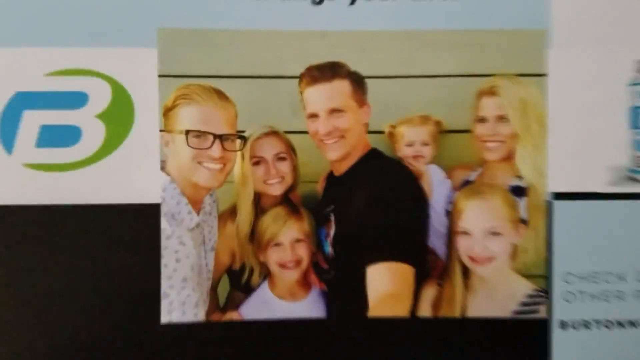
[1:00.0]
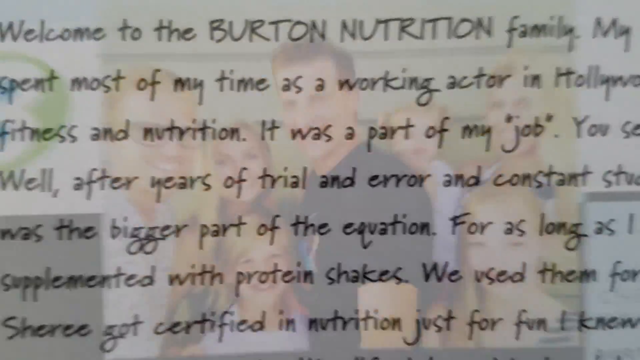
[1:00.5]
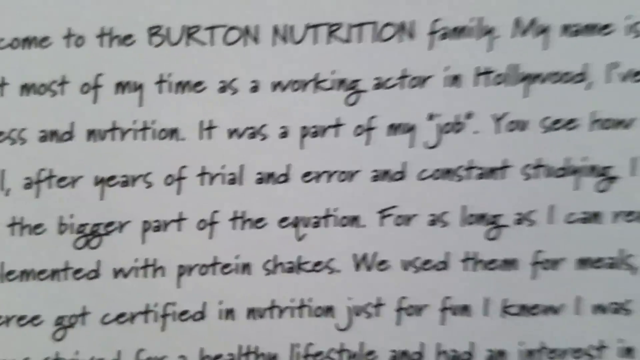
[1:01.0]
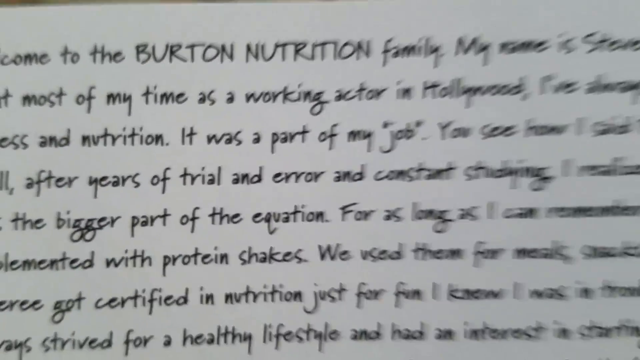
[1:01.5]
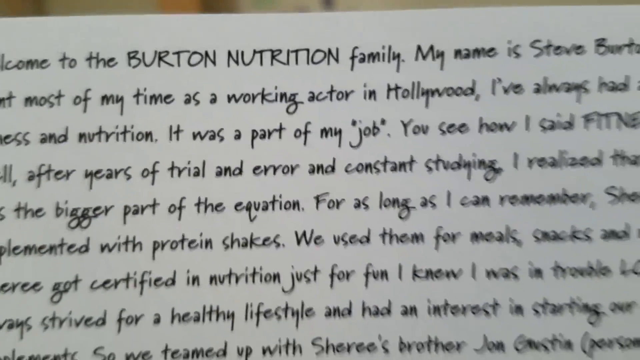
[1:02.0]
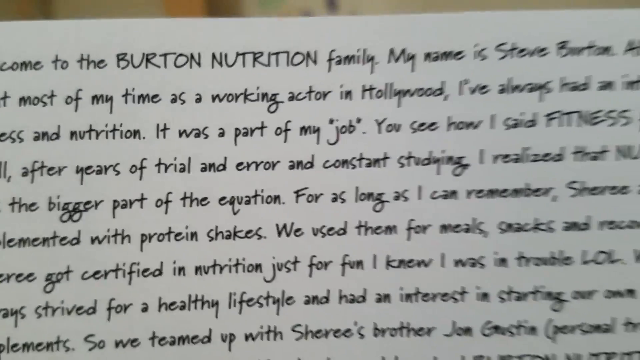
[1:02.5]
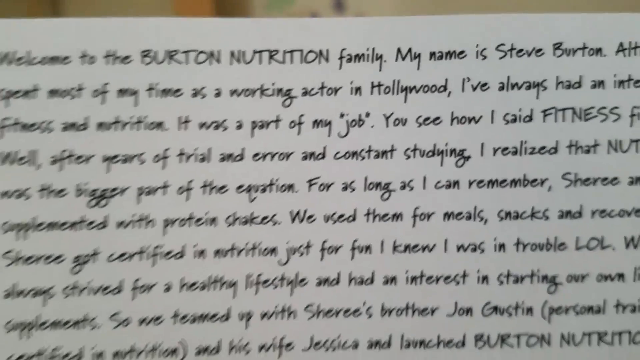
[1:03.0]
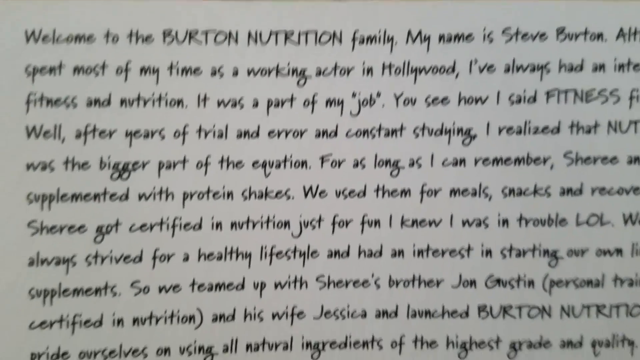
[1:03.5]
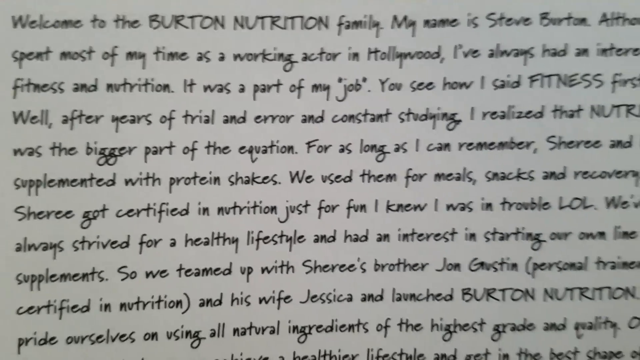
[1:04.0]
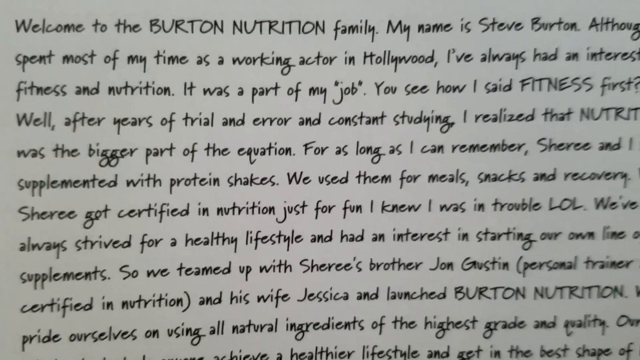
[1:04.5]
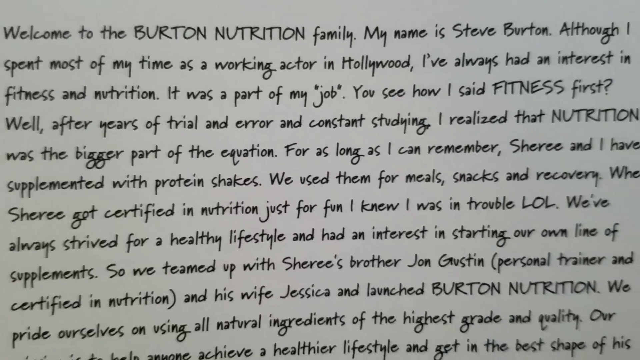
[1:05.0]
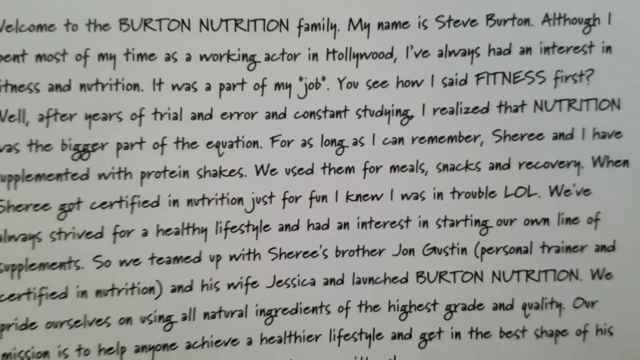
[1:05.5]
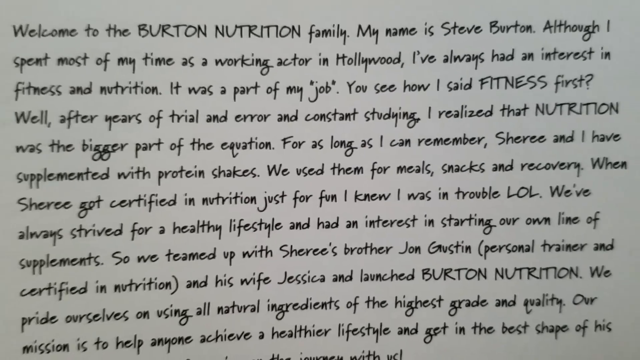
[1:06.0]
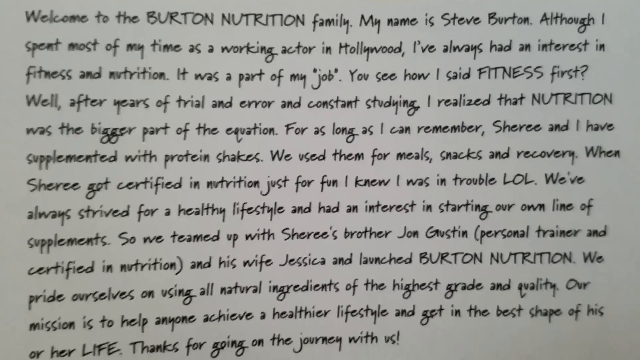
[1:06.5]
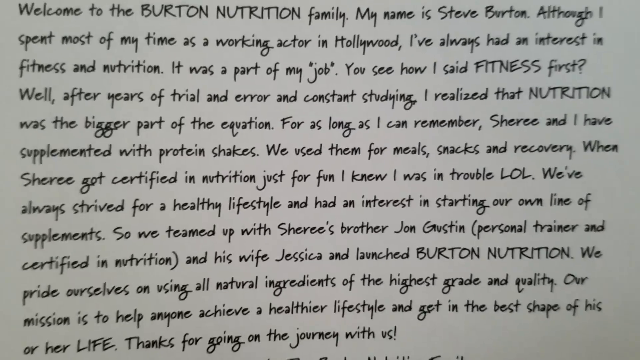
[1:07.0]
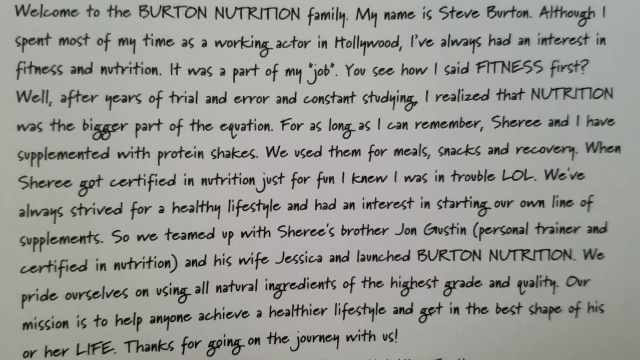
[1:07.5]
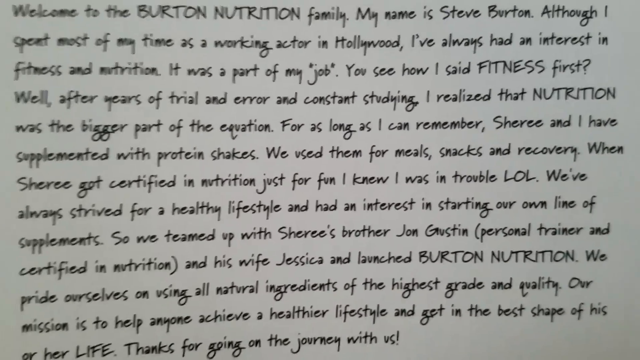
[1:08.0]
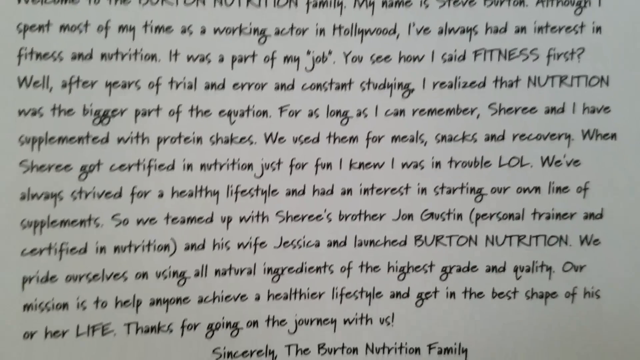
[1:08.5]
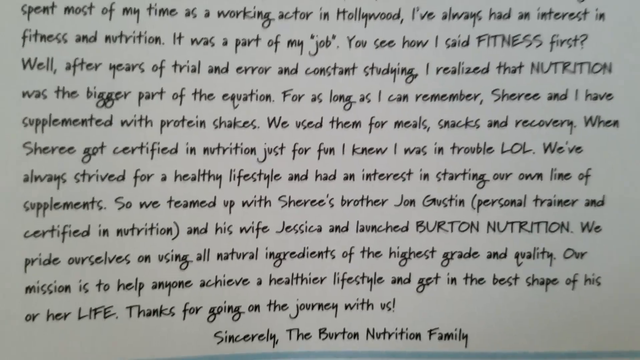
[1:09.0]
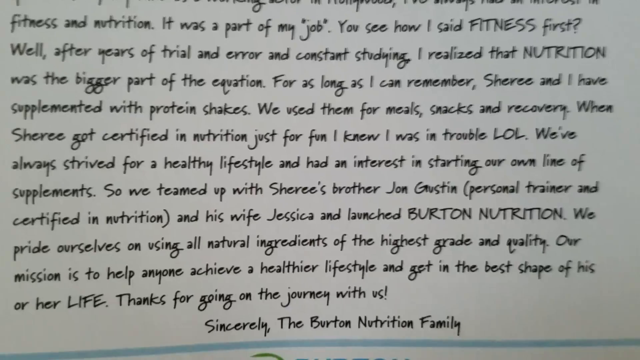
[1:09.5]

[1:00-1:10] The ad for the supplement shows a picture of seven different people, apparently two men and five women, some of them kids. The man on the left wears black glasses, and the man in the middle wears a blue shirt. There are three children: a toddler and two who look like older girls, about seven to nine years old. There is also a girl who looks to be in her late teens or very early 20s. The toddler is held by a blonde woman who looks to be in her 30s or 40s. Next, a large paragraph appears that begins "Welcome to the Burton Nutrition family. My name is Steve Burton." It goes on to say they have always had an interest in fitness and nutrition, and it appears to discuss the product they made.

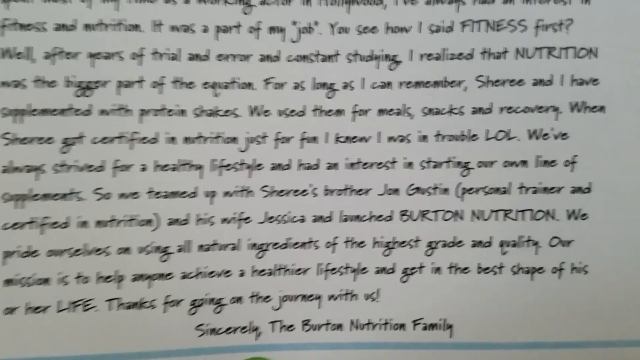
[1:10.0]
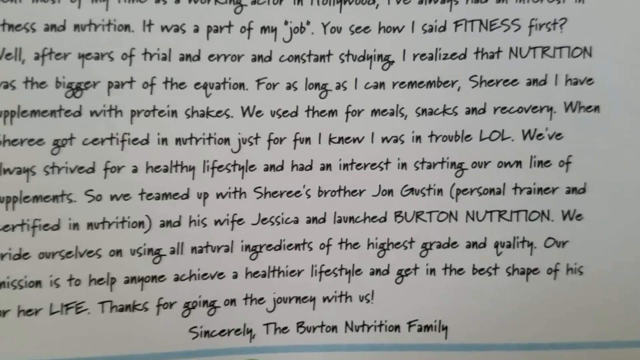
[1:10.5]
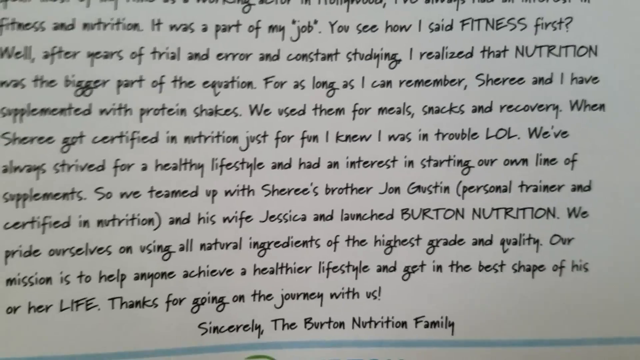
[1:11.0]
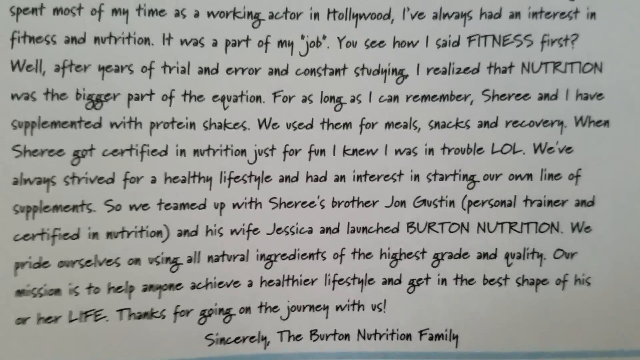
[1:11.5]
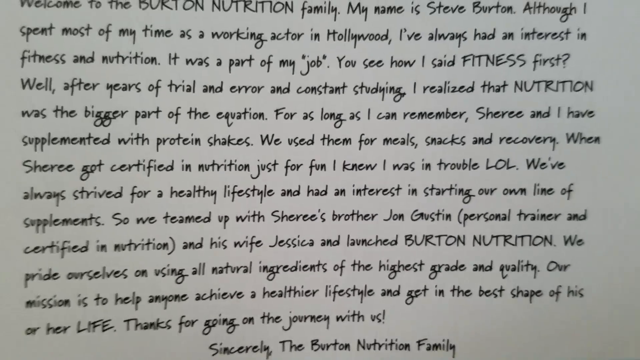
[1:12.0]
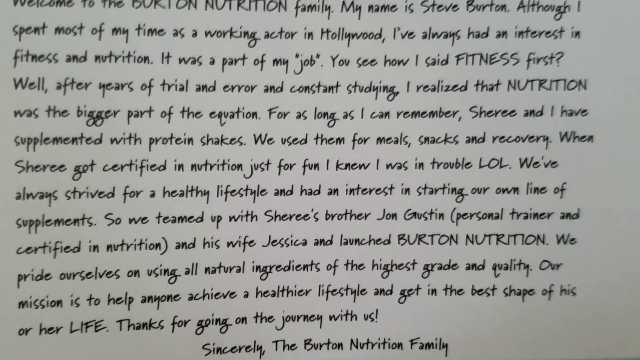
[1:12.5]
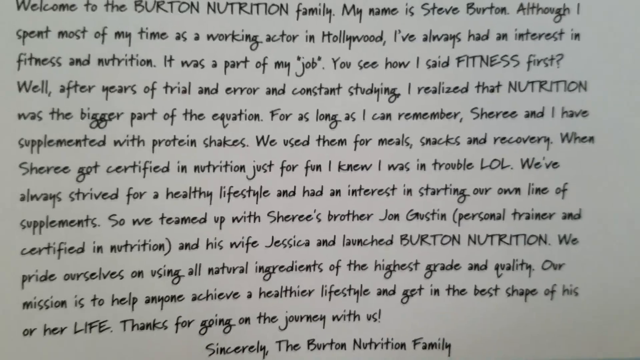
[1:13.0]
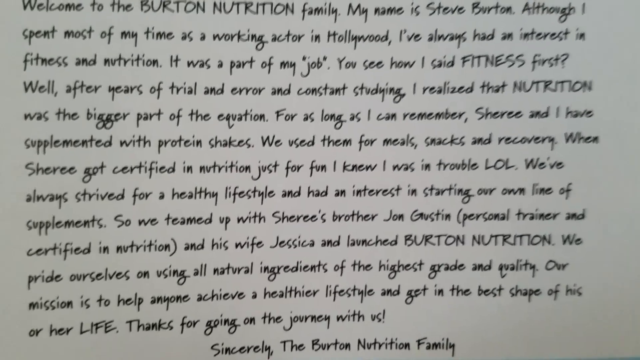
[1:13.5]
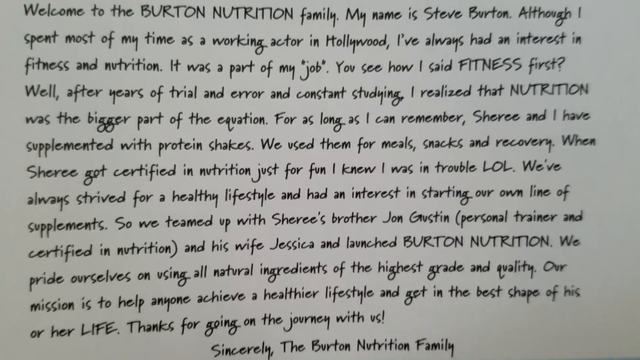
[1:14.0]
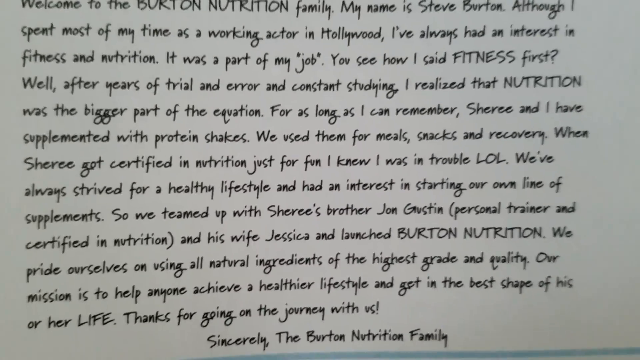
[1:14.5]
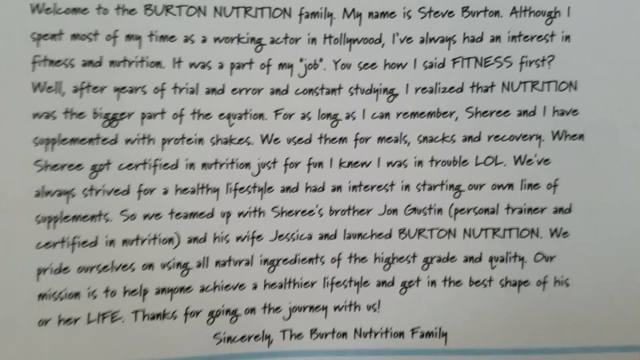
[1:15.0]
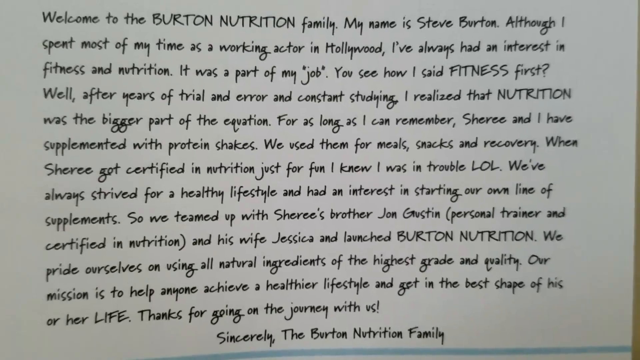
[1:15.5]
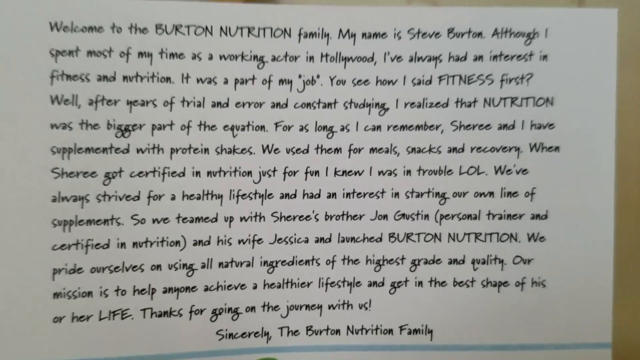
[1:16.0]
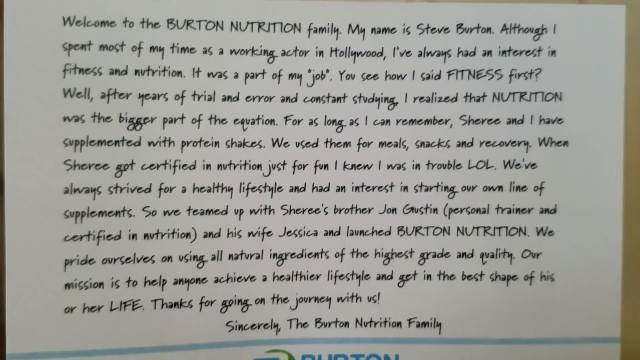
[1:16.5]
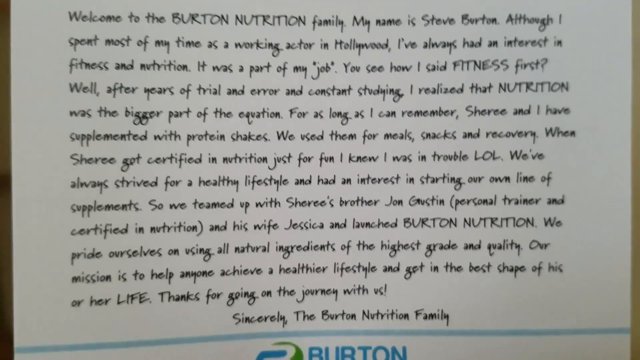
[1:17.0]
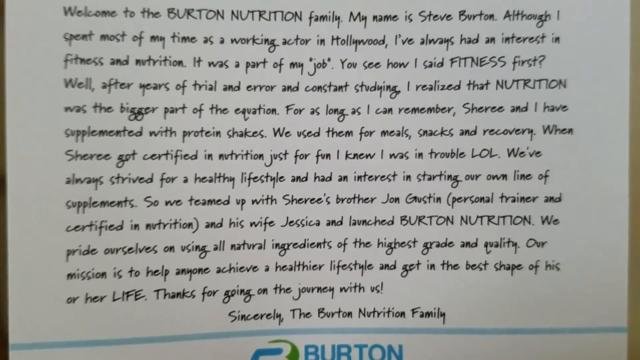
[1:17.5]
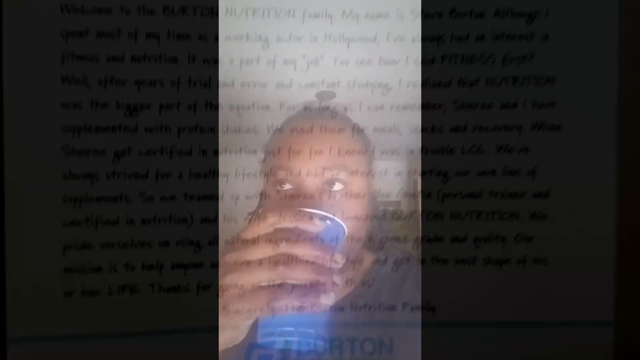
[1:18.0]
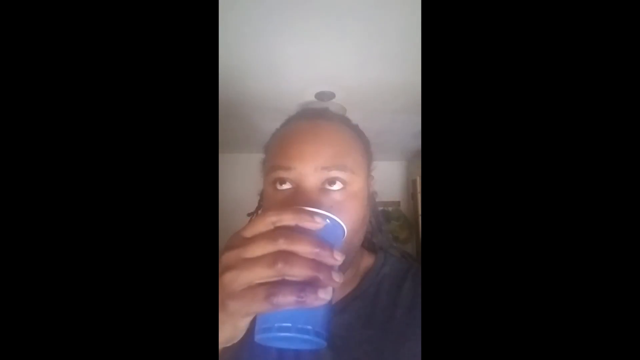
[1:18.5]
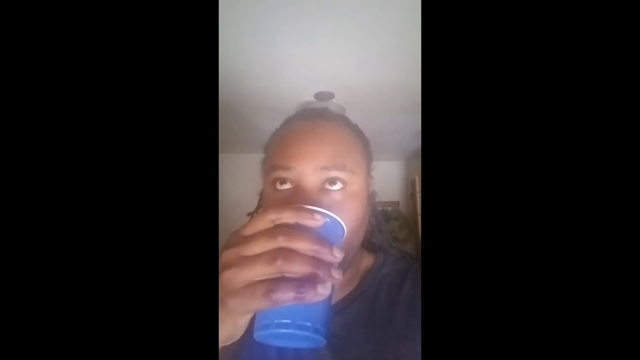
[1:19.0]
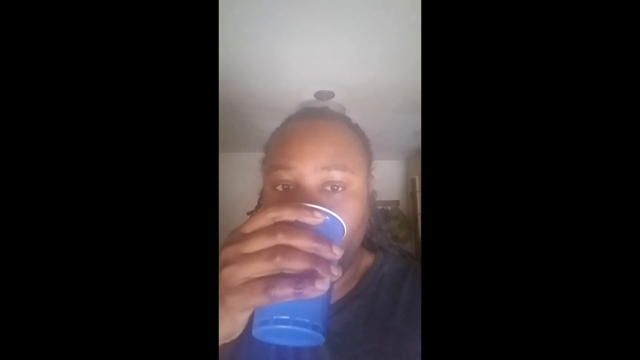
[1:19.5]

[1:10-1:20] The same paragraph is shown, describing nutrition and how it became part of their life. It is signed "Sincerely, the Burton Nutrition Family." It appears to be on the back of the ad. Everything is written in black, and a logo is visible at the very bottom of the writing. The video then returns to the man, a black man in his 20s or possibly early 30s. He holds up a blue Solo cup in his right hand to drink from; the cup is blue with a white edge. He doesn't say anything, and the shot ends with him drinking from the cup.